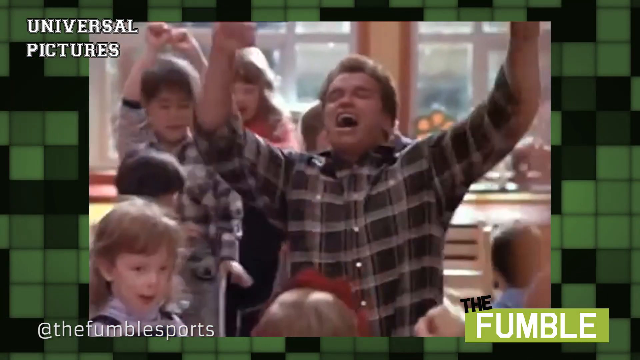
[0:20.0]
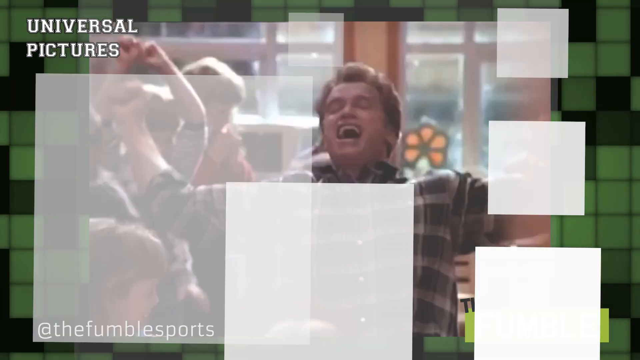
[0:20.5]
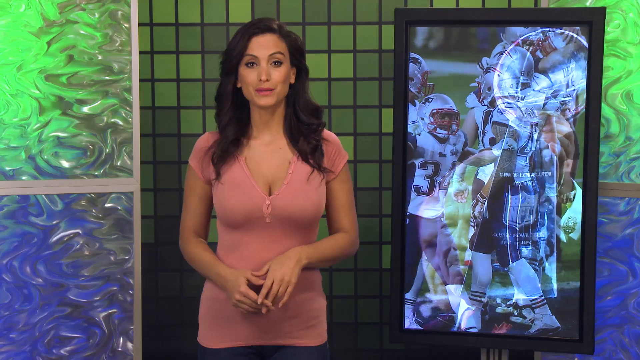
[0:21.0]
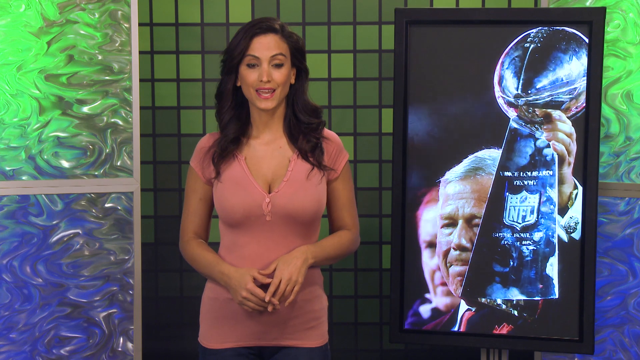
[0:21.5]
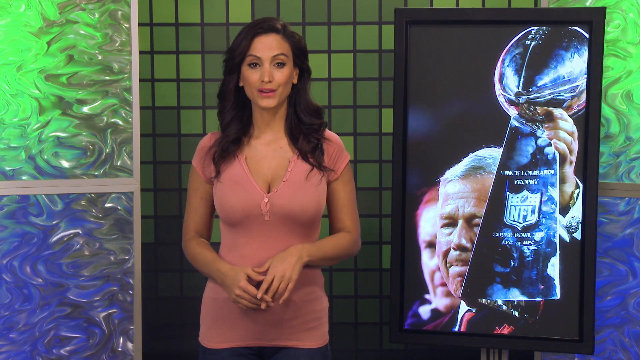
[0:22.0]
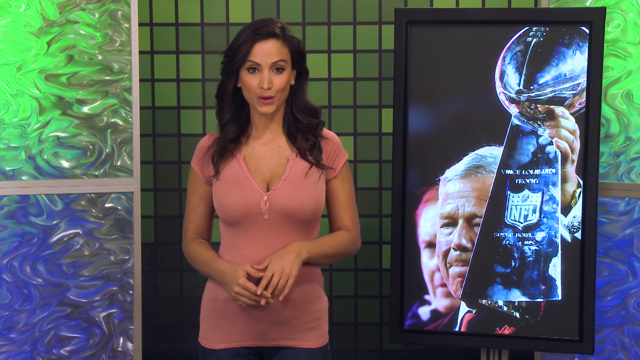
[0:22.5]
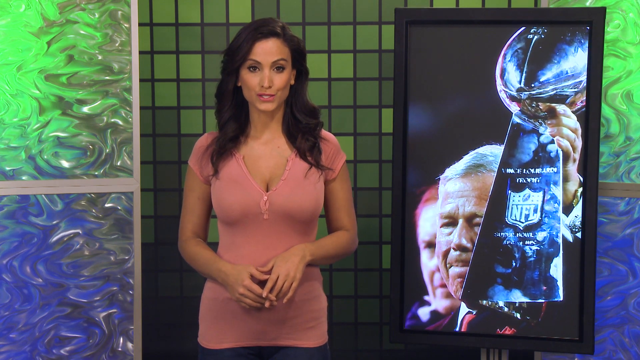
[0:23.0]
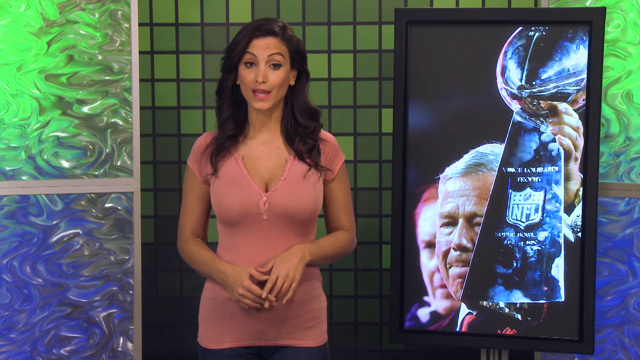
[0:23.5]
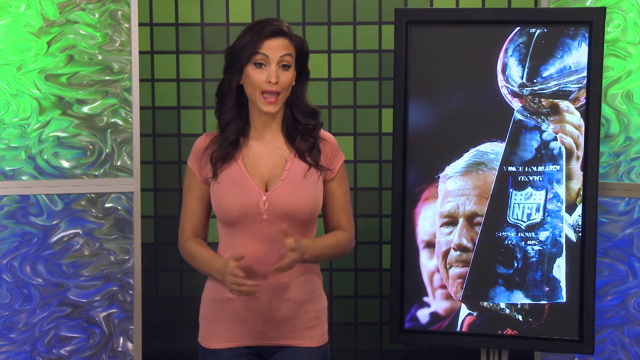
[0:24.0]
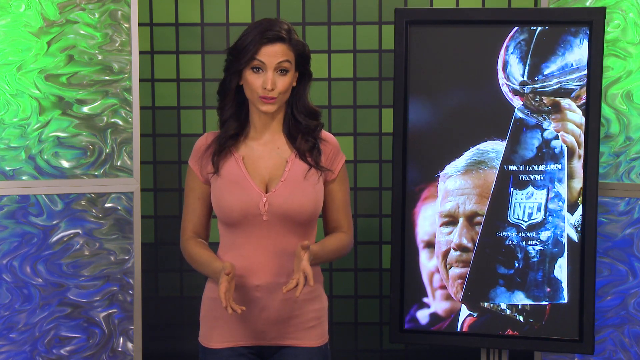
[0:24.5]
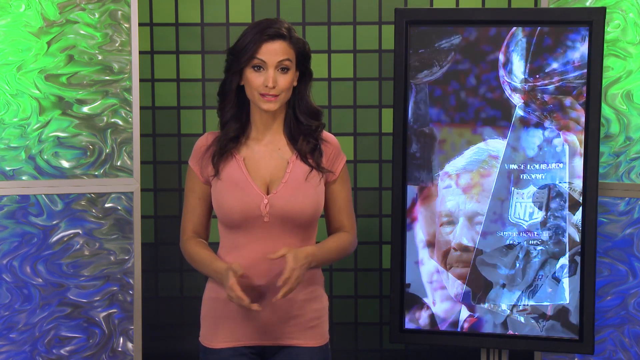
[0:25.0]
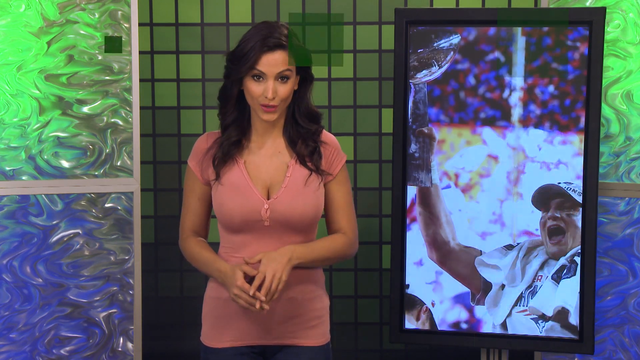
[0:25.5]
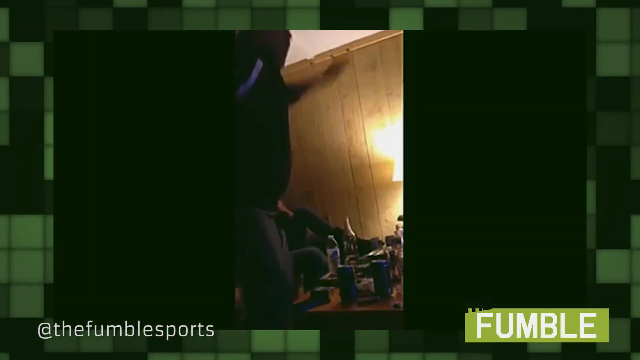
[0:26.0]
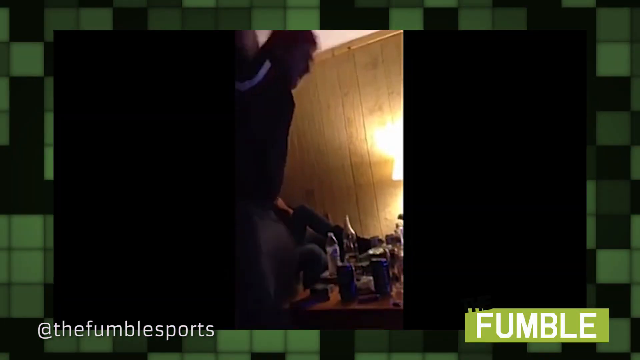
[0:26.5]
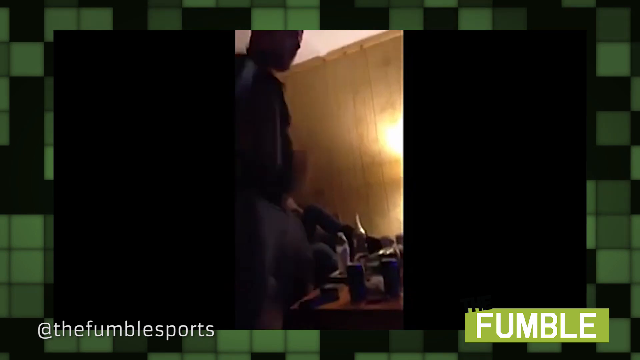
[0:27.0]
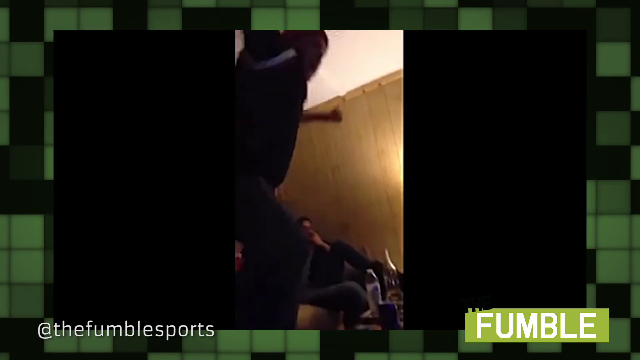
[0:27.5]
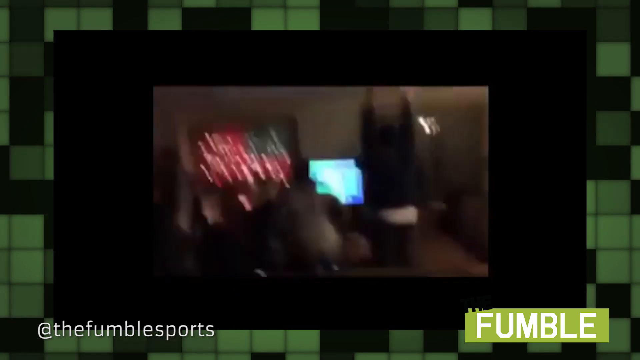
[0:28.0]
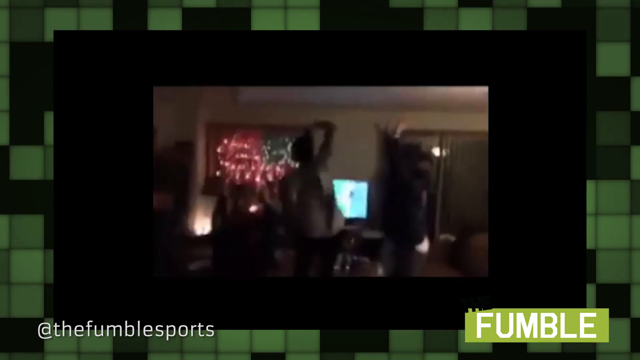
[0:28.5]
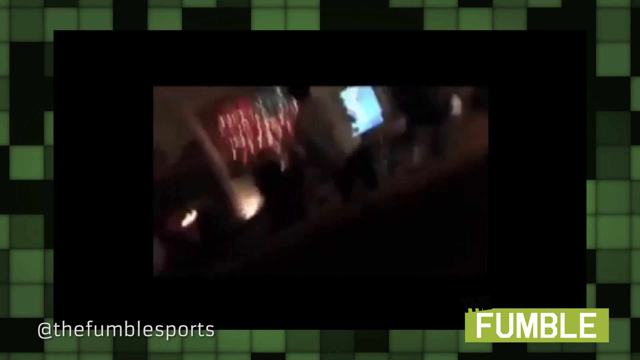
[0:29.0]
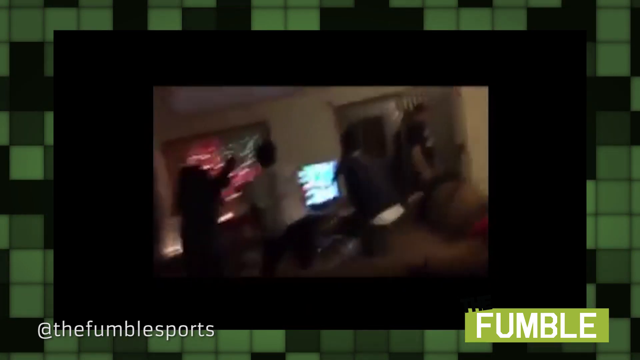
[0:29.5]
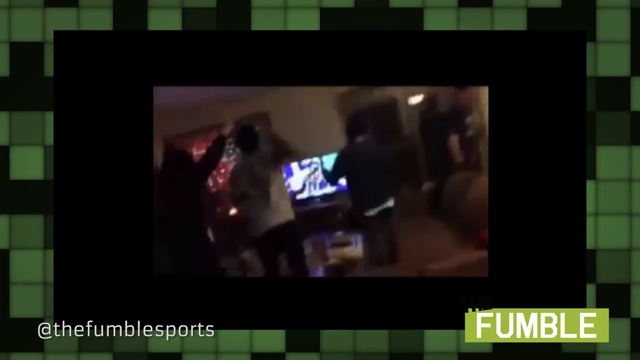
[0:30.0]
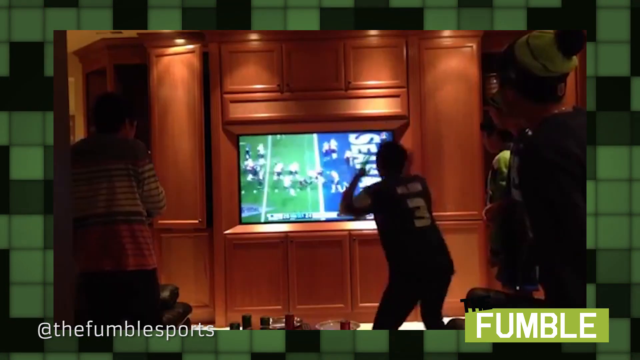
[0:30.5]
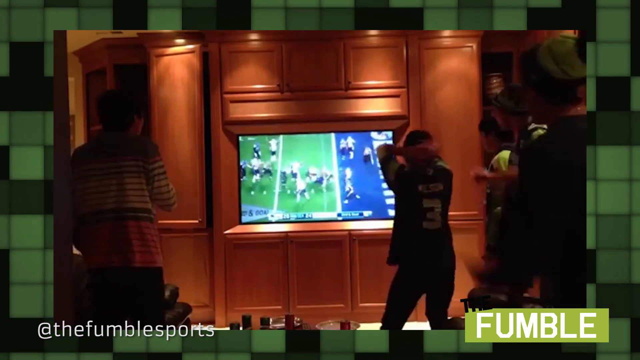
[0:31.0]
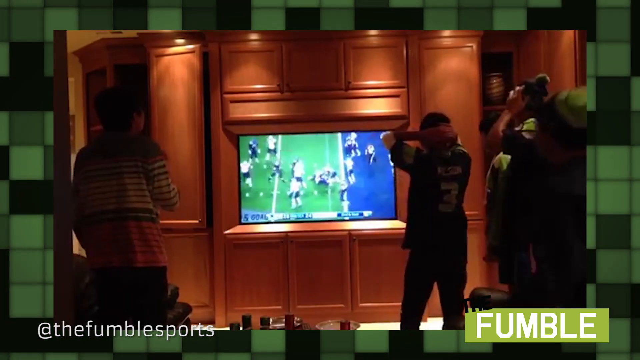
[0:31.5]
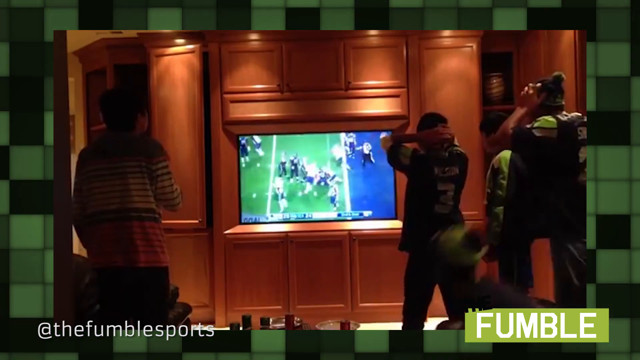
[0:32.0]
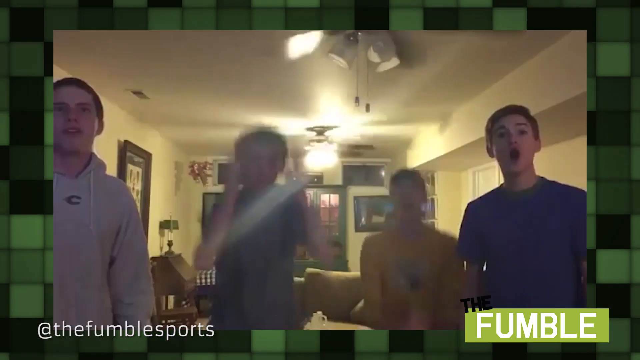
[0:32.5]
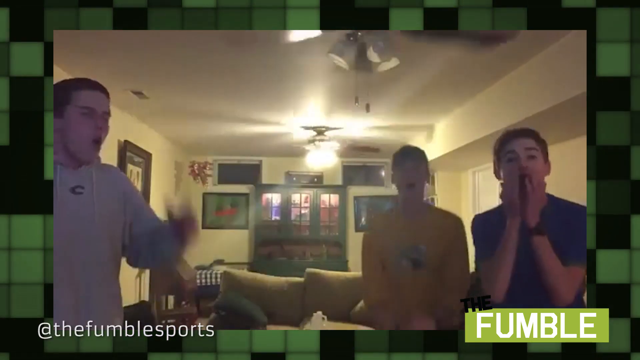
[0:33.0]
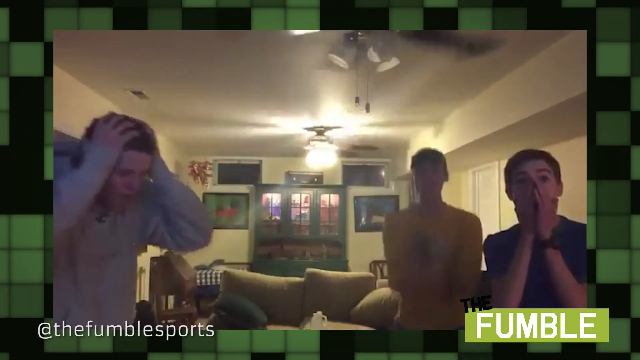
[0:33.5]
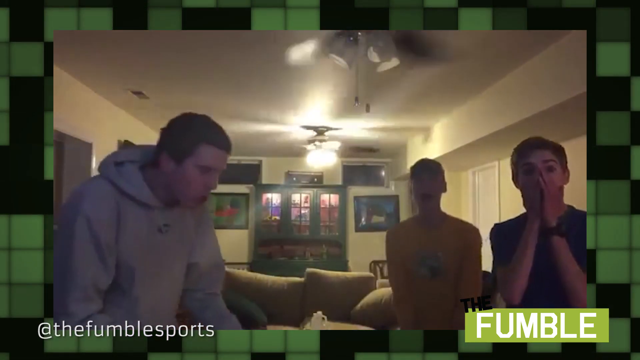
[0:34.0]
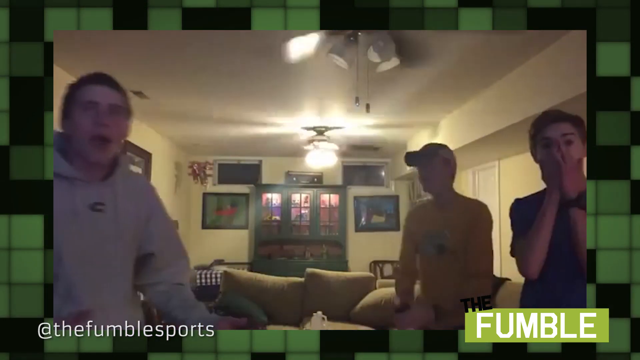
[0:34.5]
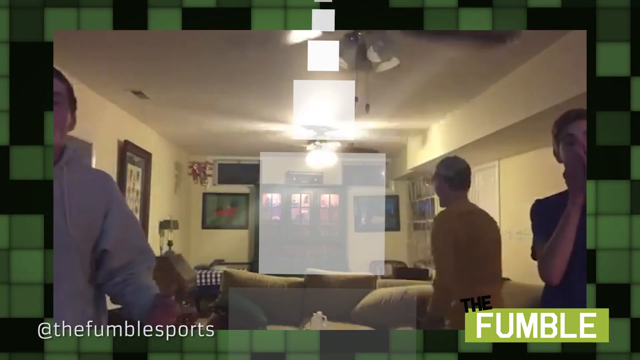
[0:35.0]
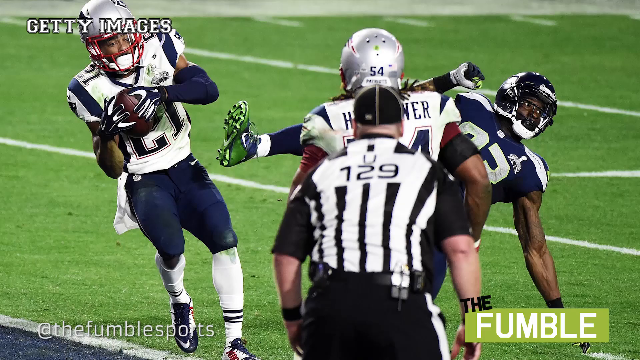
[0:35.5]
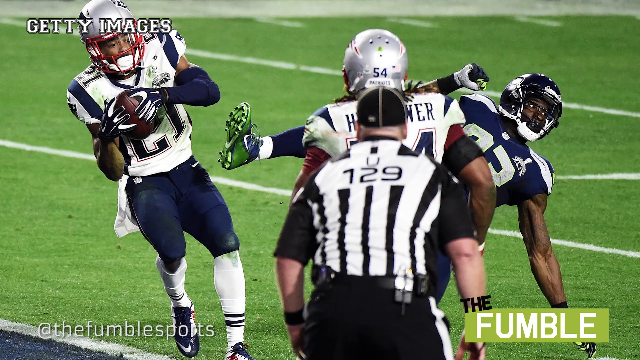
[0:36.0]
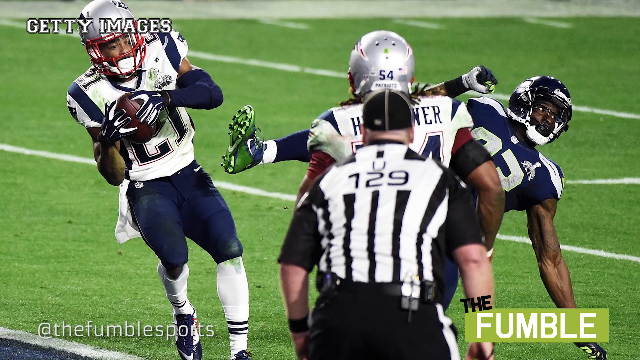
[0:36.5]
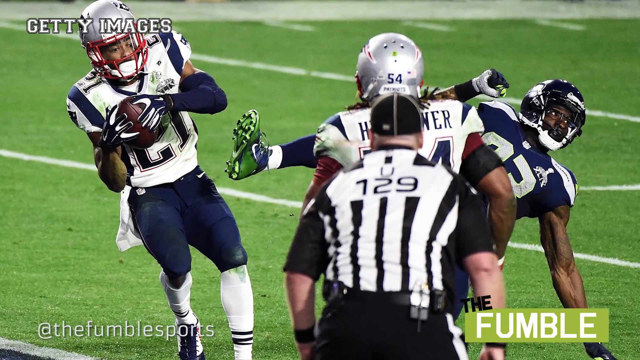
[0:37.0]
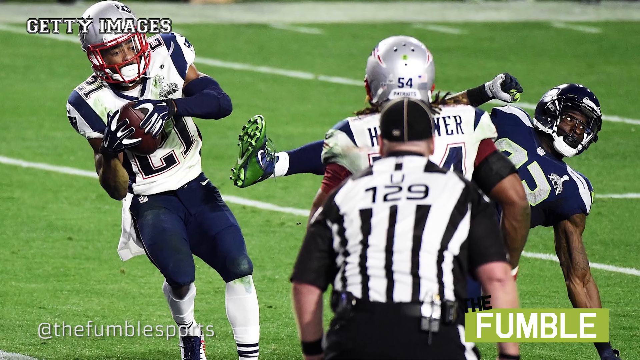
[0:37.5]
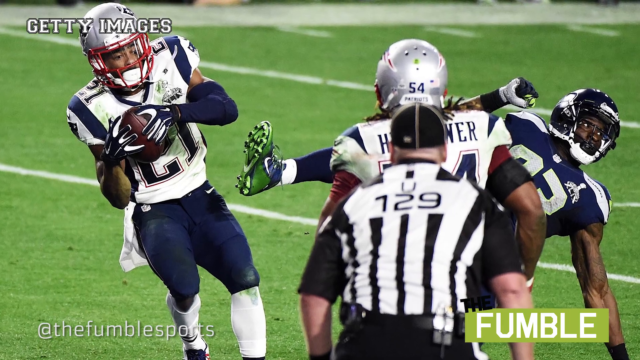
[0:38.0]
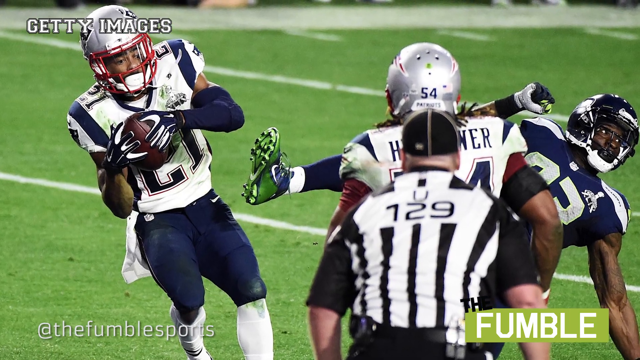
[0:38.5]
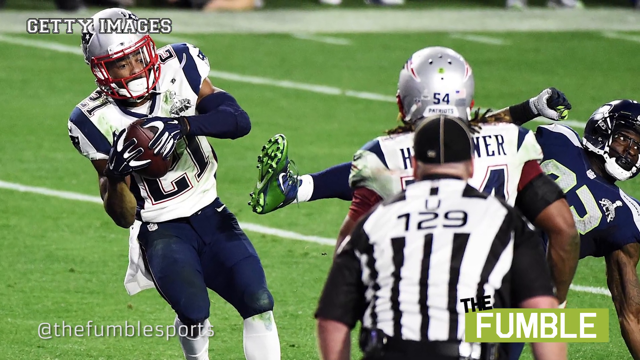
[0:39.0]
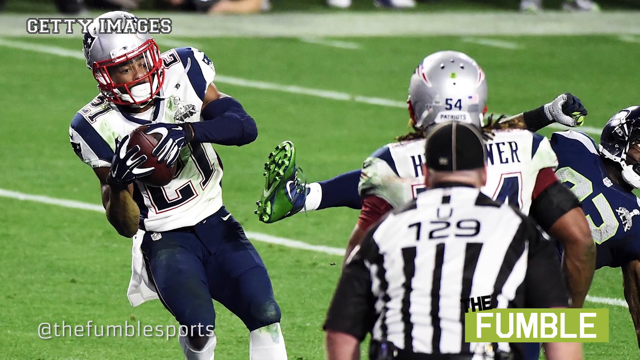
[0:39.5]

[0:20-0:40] The female reporter in the pink dress continues to speak, her mouth moving while her hands and arms rest in the same position, until she turns her hands to the side and makes hand gestures as she talks. The video changes to footage of somebody jumping up and down inside their house, followed by another video of two people jumping up and down inside their house while watching game footage on TV. Next, from the Patriots and Seahawks game, what looks like a child puts his hands on the back of his head after watching a play; he wears a jersey with the number three. Three younger people then have a wild reaction inside a house. An image follows of Patriots player number 21 with the football as a Seahawks player falls to the ground, with referees also in the image.